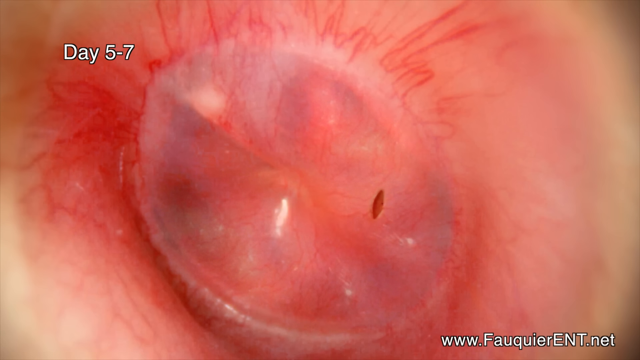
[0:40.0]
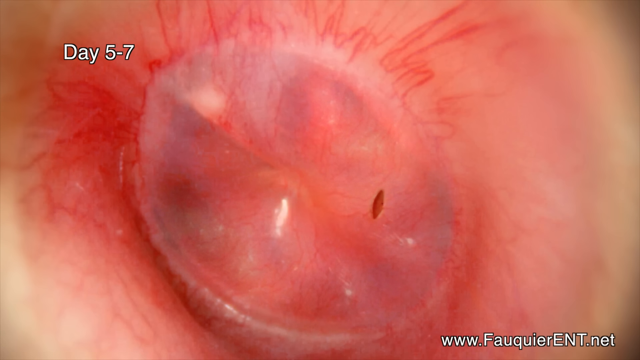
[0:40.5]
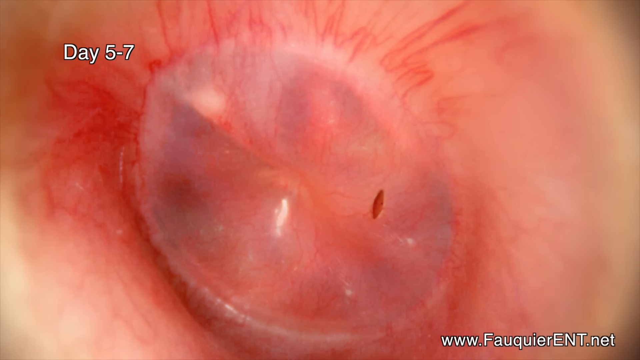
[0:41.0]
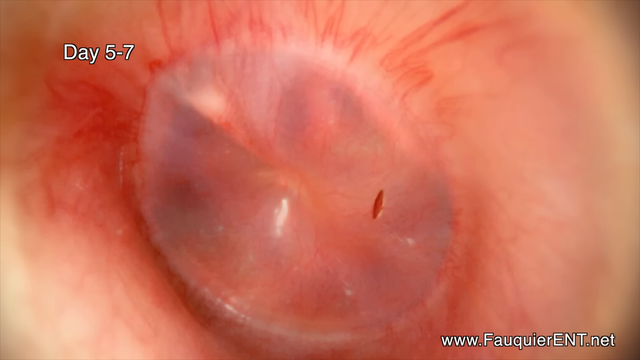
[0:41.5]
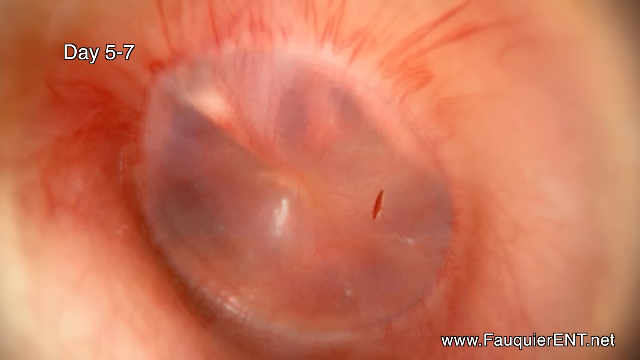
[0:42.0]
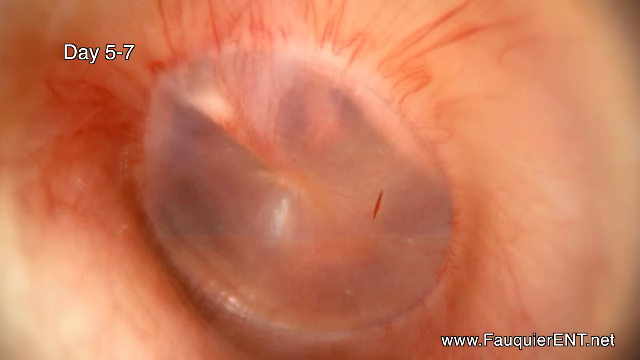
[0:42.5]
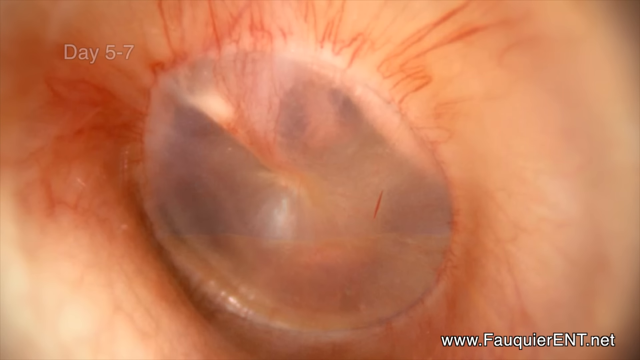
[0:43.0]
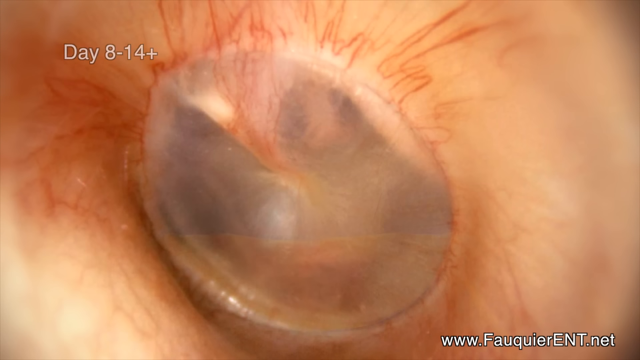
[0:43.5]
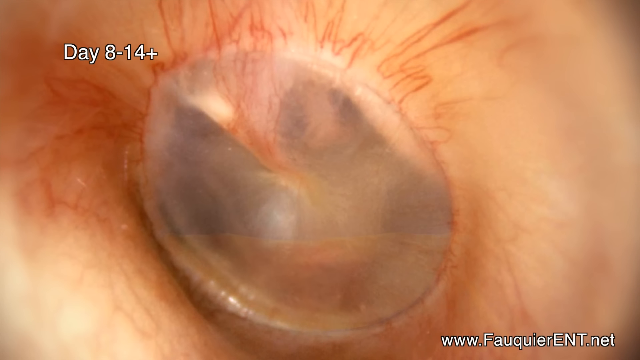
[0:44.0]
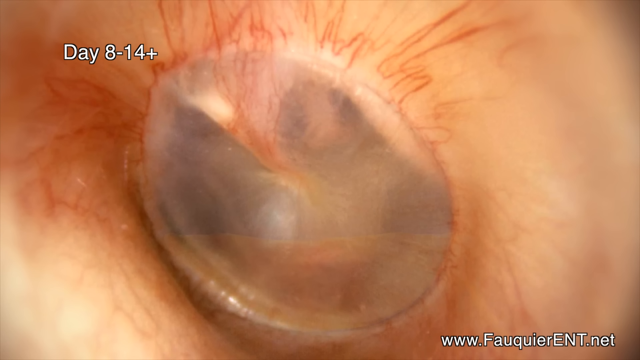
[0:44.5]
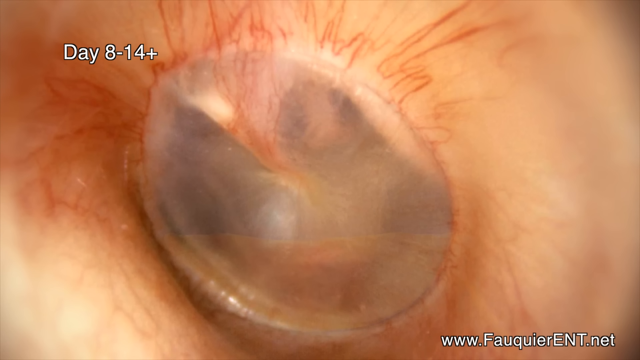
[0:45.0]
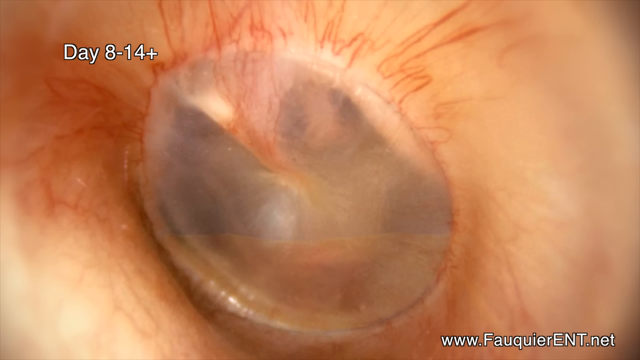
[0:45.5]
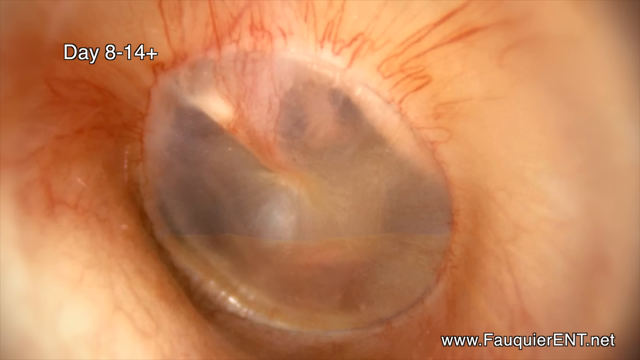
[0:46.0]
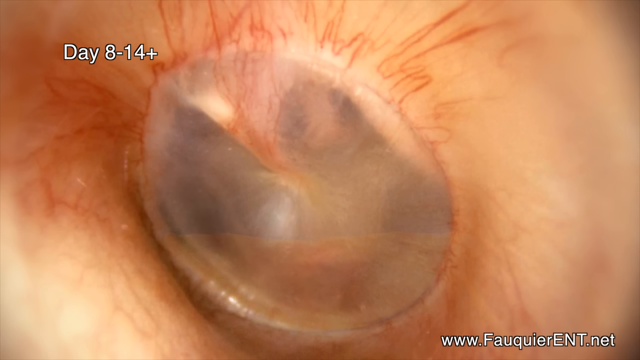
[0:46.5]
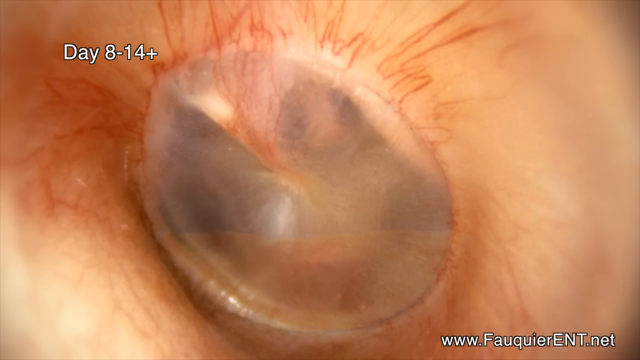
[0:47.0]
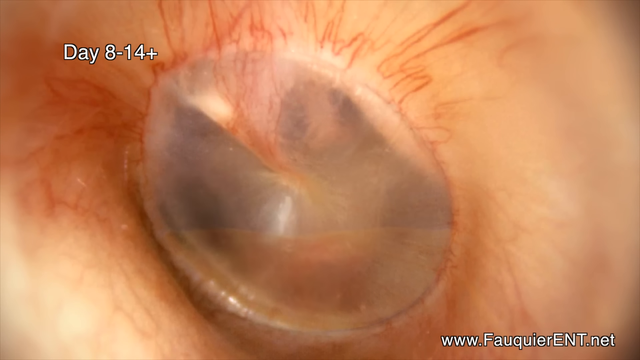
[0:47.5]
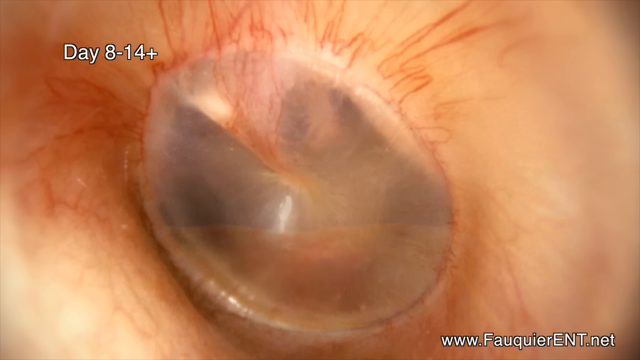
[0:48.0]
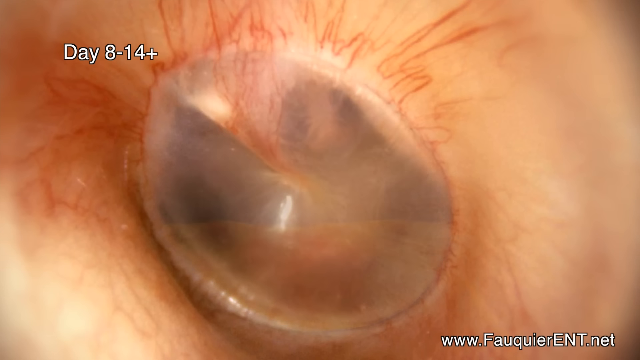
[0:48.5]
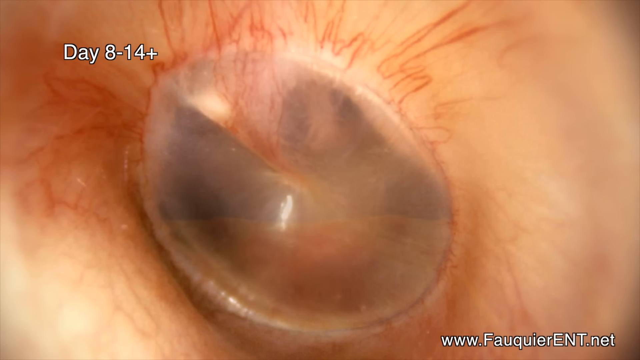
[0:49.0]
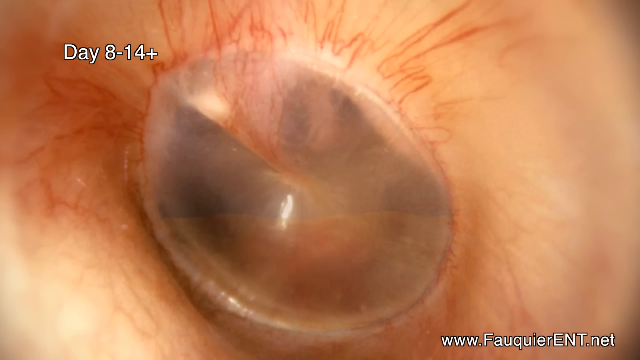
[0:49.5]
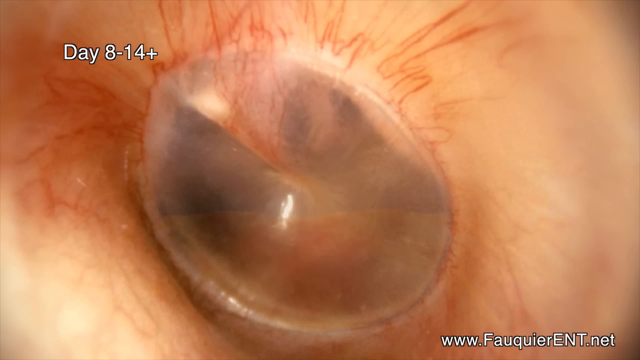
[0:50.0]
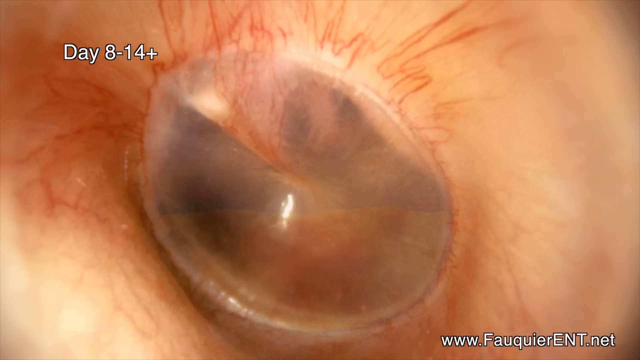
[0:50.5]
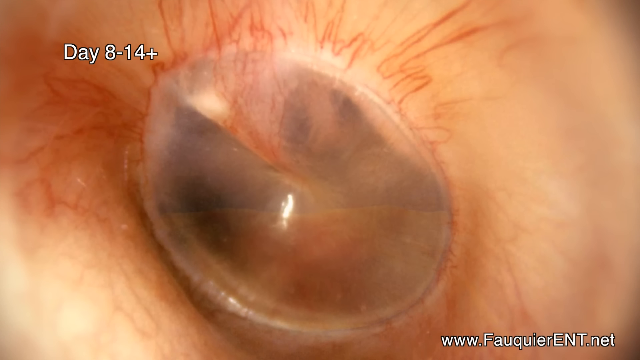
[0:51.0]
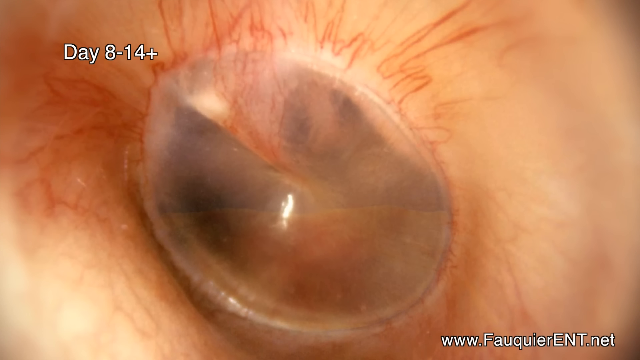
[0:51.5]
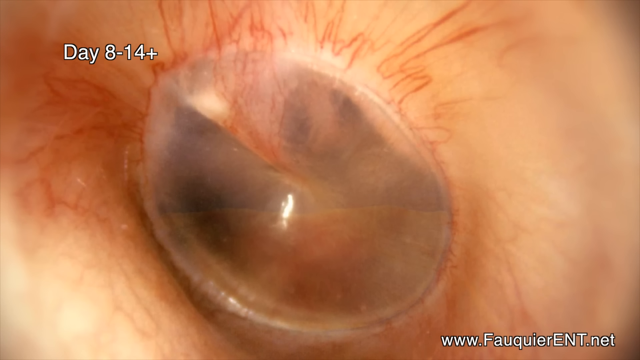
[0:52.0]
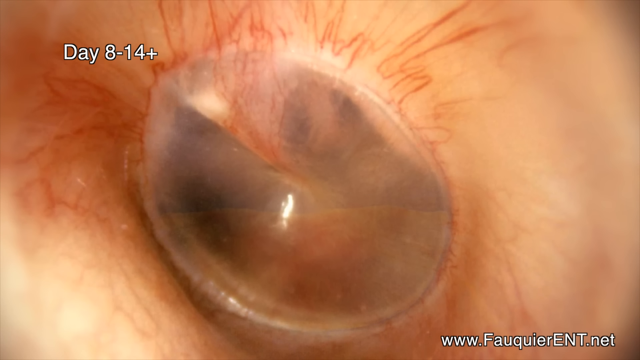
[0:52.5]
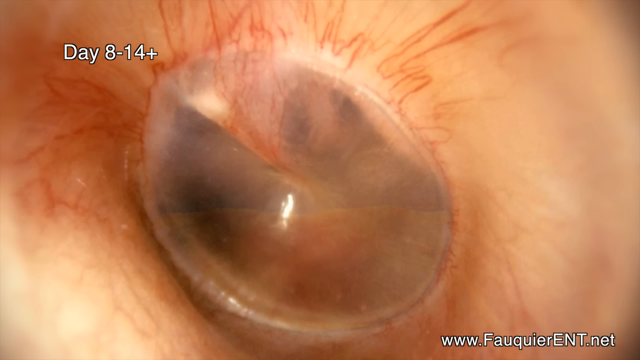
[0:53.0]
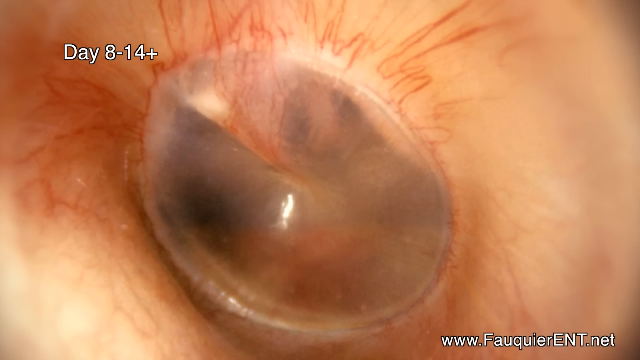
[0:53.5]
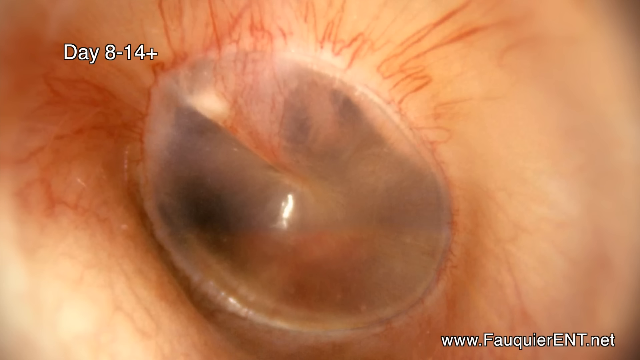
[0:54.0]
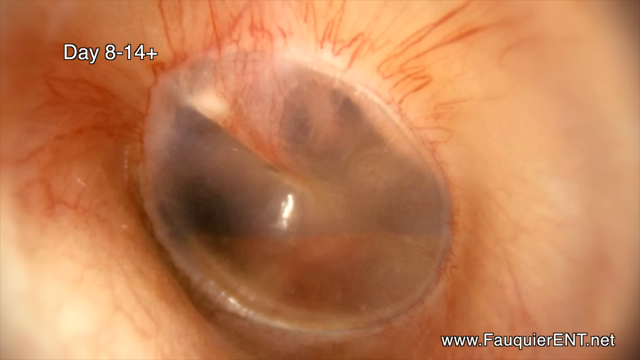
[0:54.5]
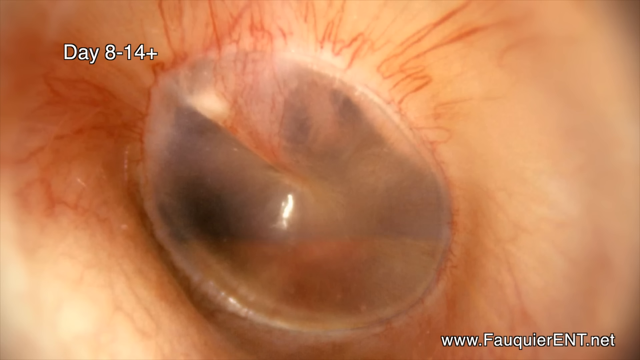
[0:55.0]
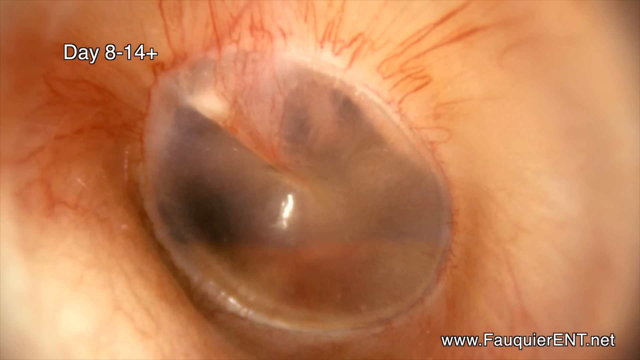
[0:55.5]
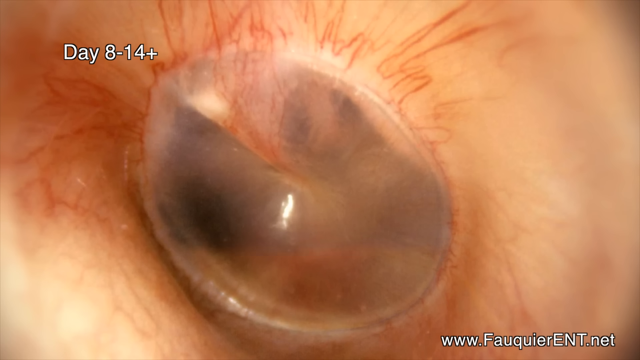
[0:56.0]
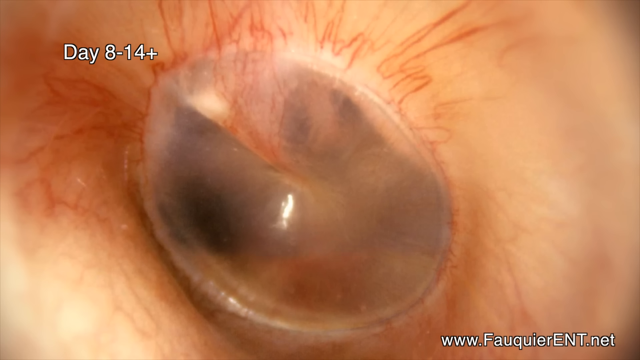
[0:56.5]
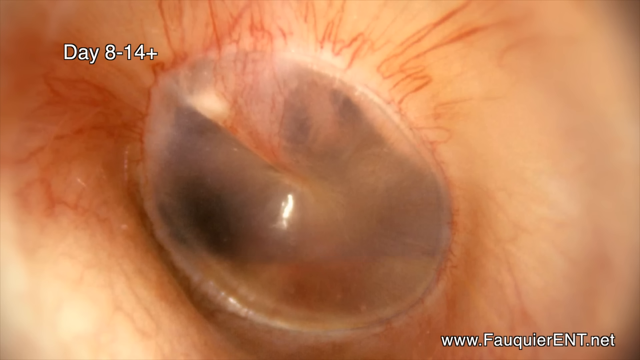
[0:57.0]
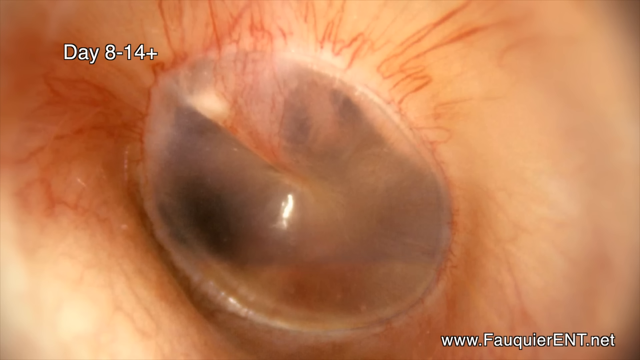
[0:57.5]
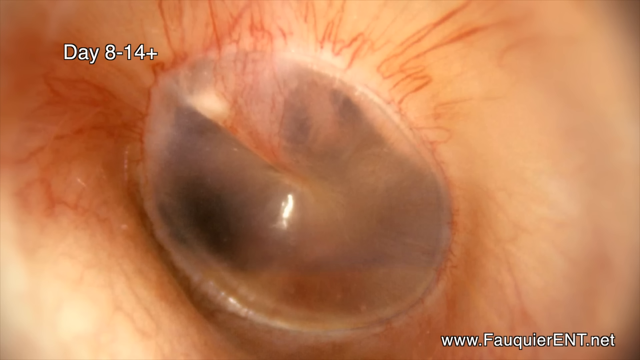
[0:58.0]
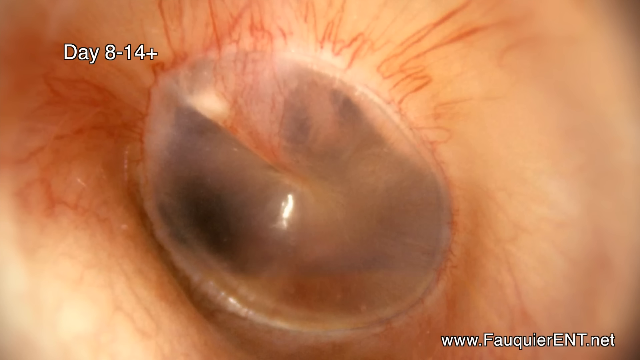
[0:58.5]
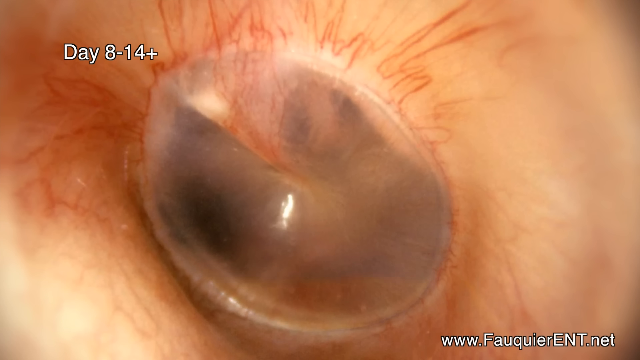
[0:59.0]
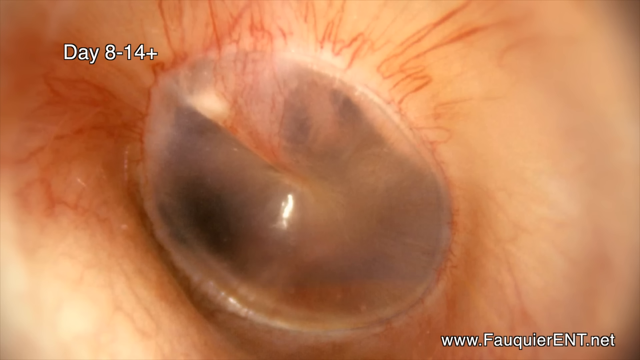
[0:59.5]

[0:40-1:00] At day five to seven, the whole surrounding area eventually becomes yellow-toned instead of pink. The label then reads "day eight to fourteen plus." At this stage the transparent layer kind of fills a third of the way with yellow pus again, rises to about halfway, and then the pus level inside the layer starts to lower again. Outside the transparent layer, lines still stem from it, but they are a reddish-brown color rather than bright red, and the skin around it is no longer red, instead a pale, beige skin tone with less redness.